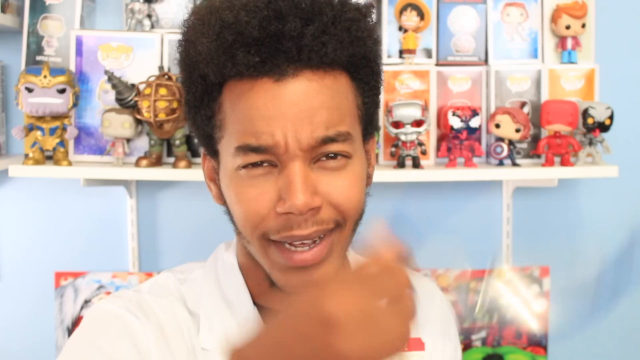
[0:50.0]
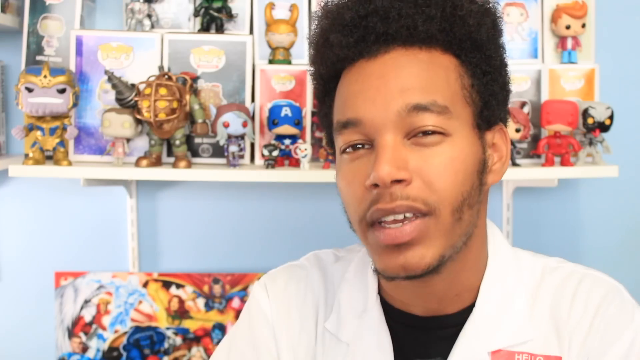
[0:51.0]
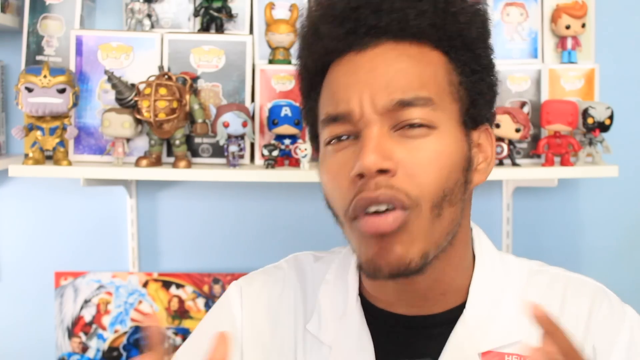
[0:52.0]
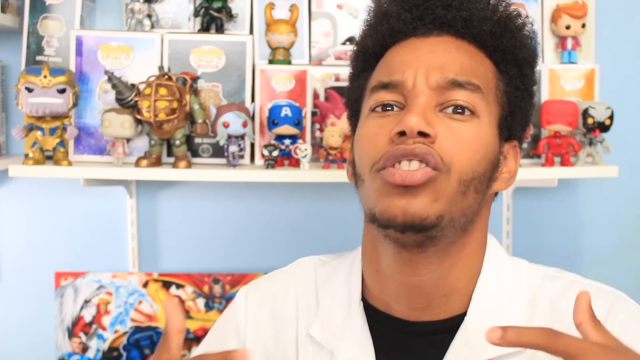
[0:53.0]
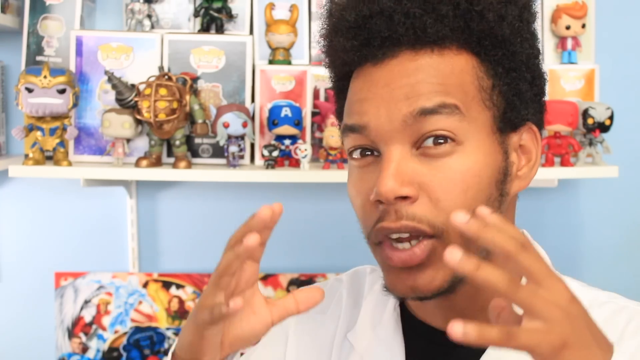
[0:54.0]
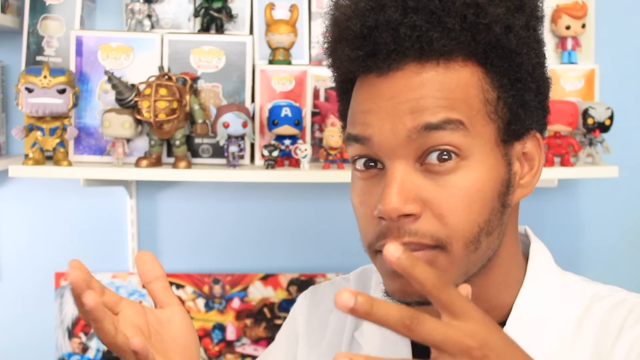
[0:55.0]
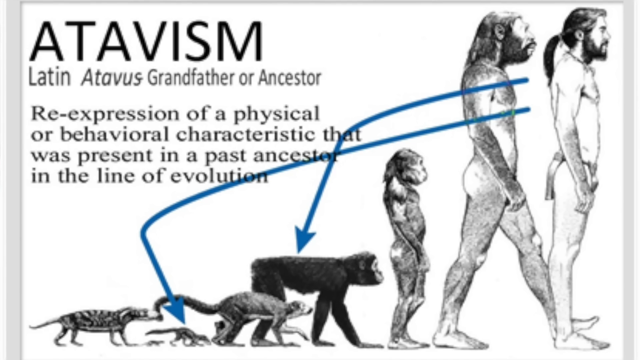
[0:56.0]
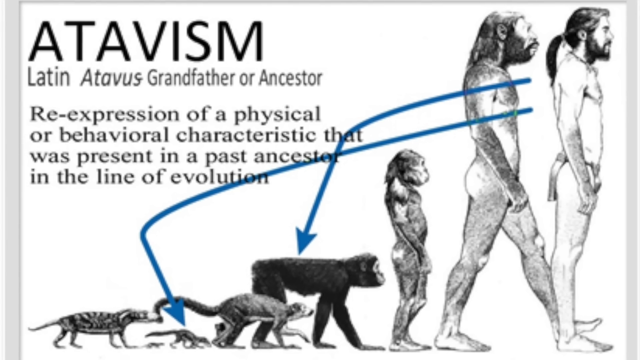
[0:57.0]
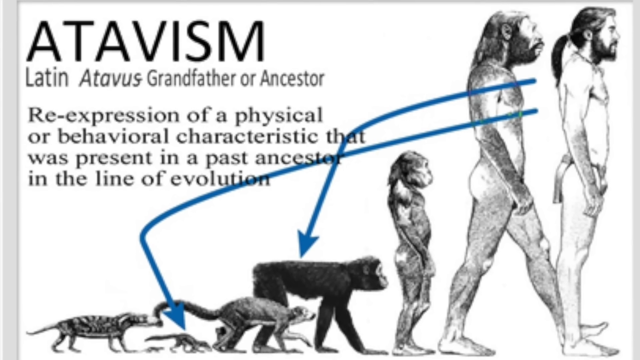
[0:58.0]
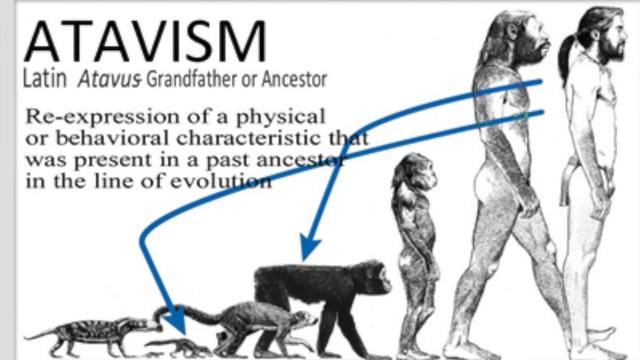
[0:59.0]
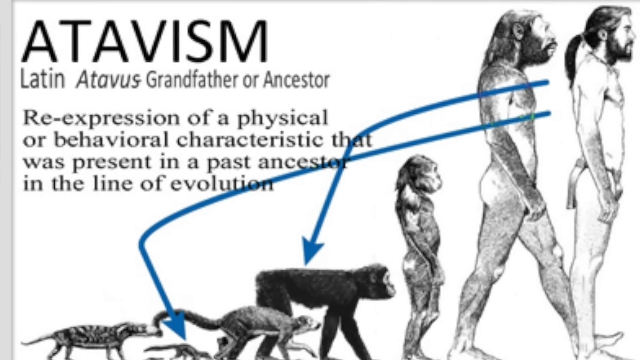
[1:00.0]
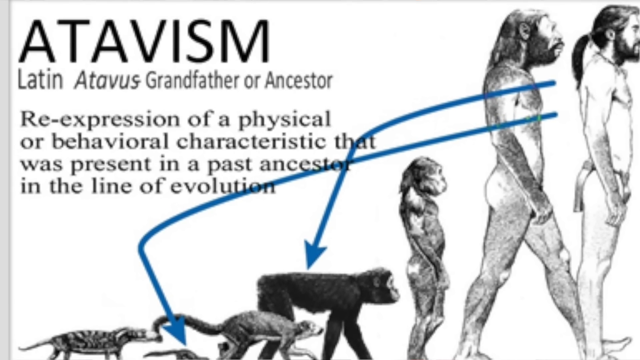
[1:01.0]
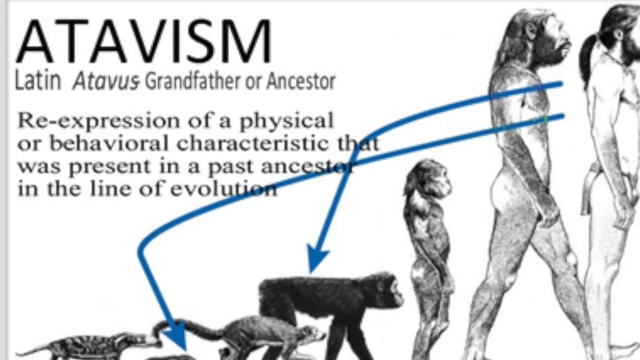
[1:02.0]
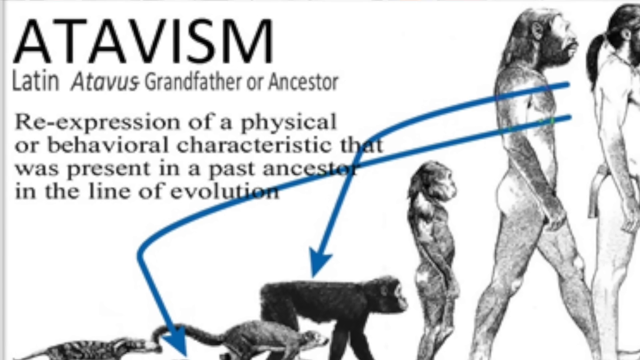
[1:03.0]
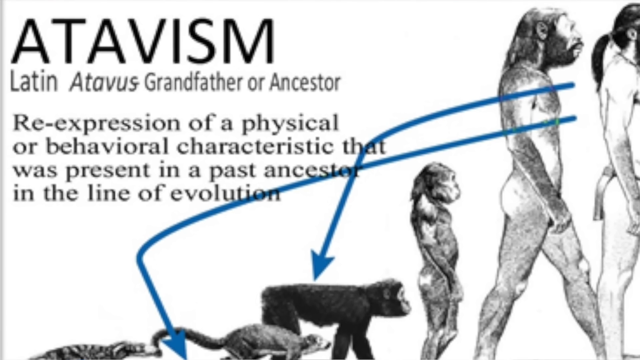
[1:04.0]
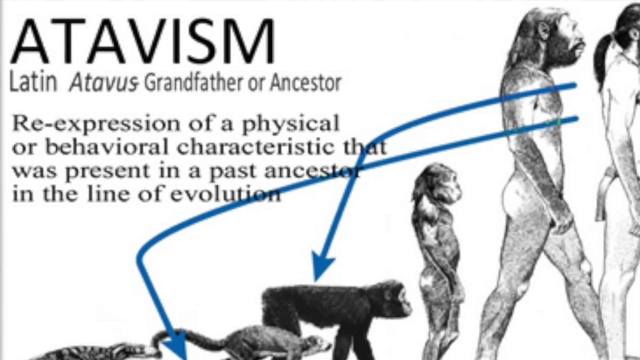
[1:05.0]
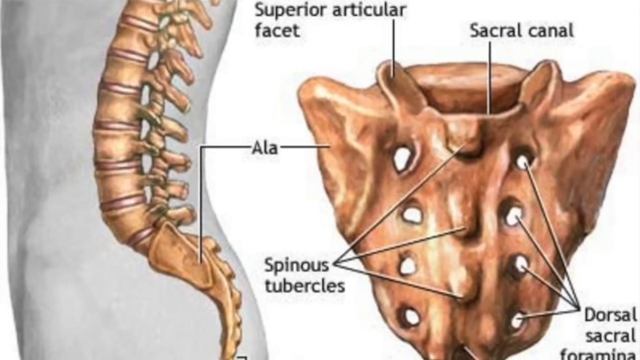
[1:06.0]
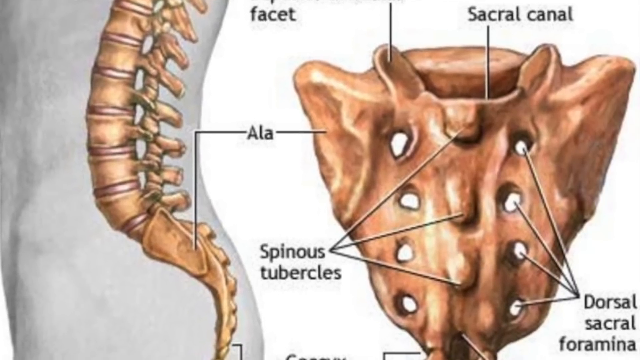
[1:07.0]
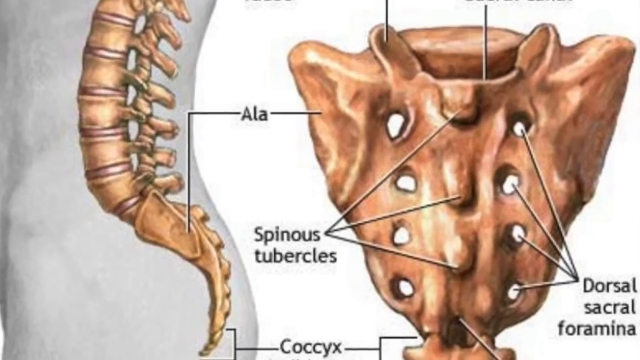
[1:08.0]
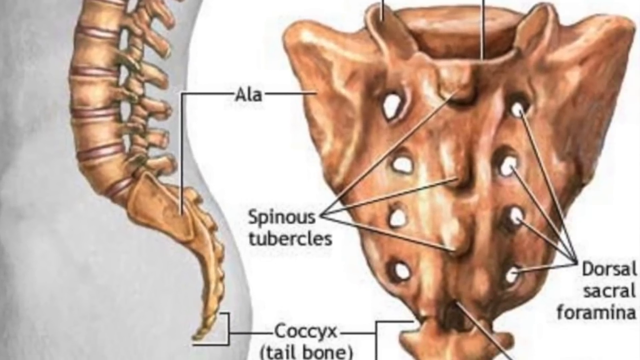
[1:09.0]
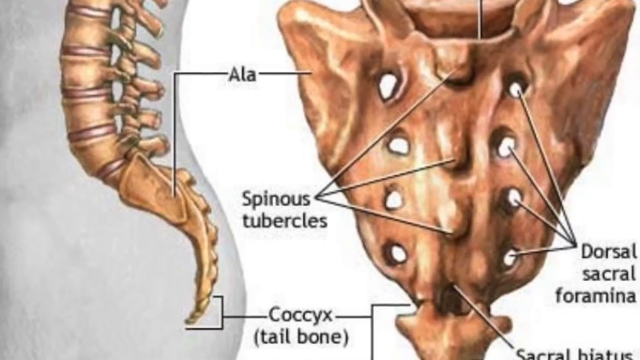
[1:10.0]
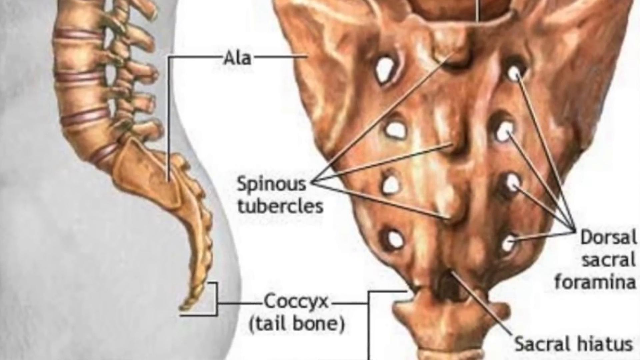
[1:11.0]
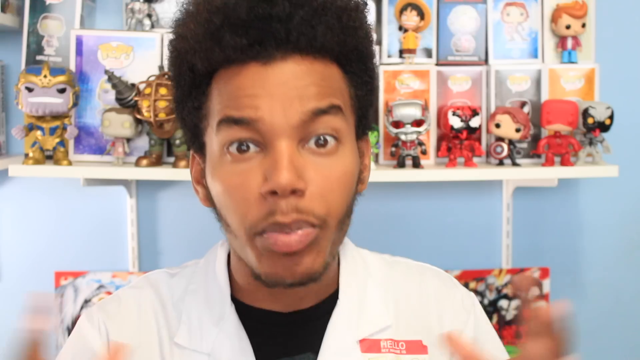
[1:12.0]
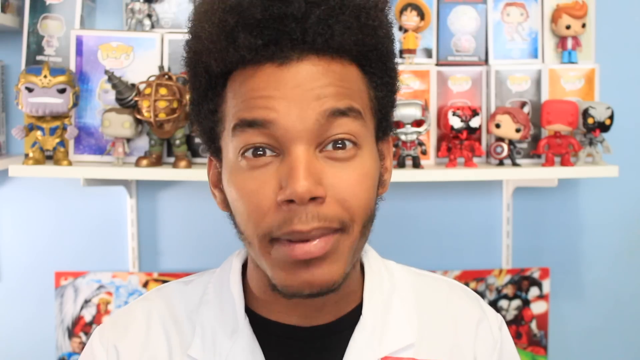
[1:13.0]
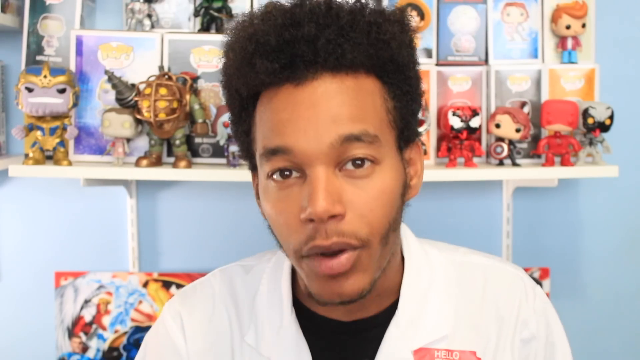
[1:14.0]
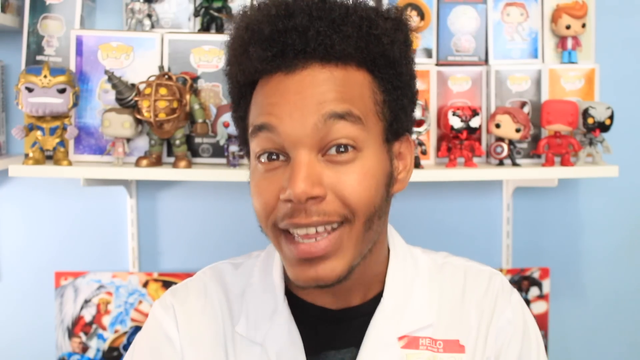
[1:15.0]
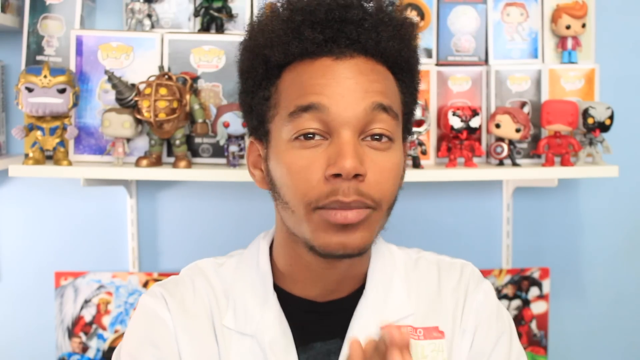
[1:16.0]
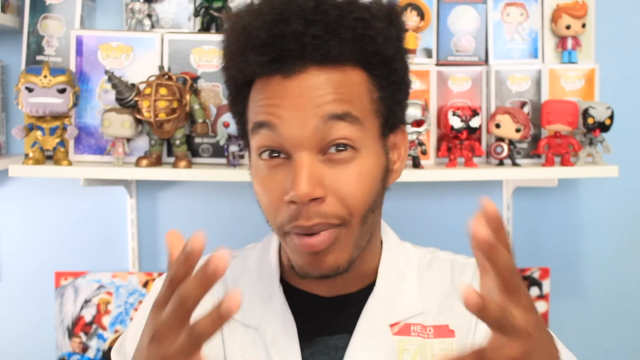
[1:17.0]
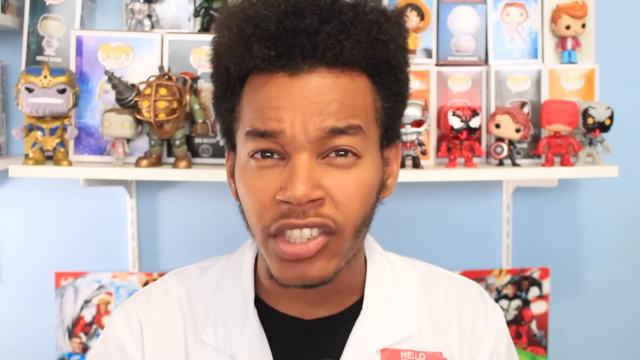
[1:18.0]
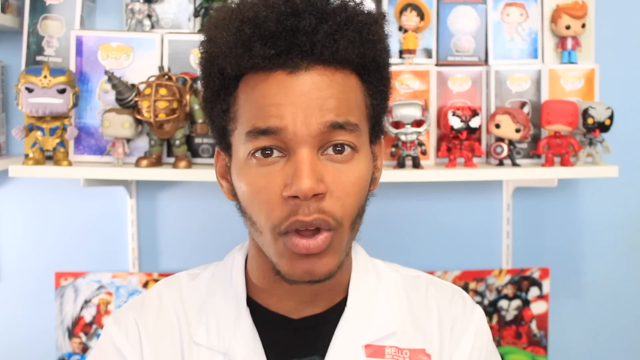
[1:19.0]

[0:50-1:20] A light-skinned man wears a white jacket with a black t-shirt. Behind him, two shelves display smaller toys of cartoon characters, the wall is light blue, and the scene is brightly lit. He moves his hands as he explains and closes one of his eyes. A black-and-white picture of evolution is shown, with a human and animals in a line and some words beside it. Something that appears to be a tooth is shown in brown.